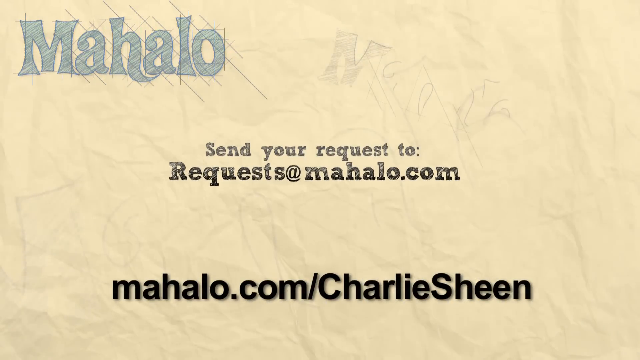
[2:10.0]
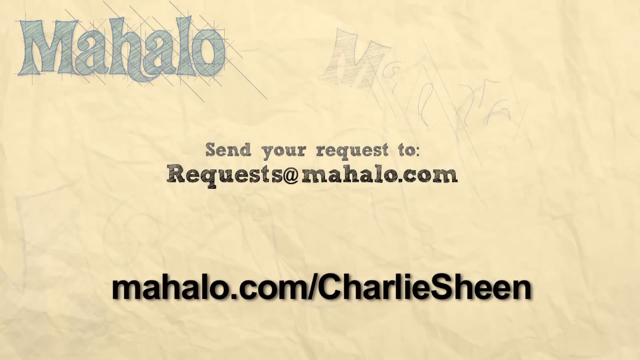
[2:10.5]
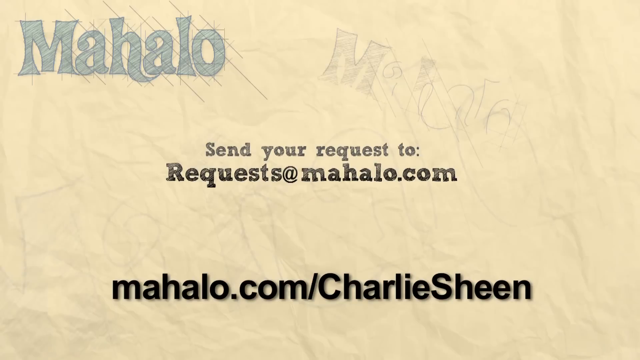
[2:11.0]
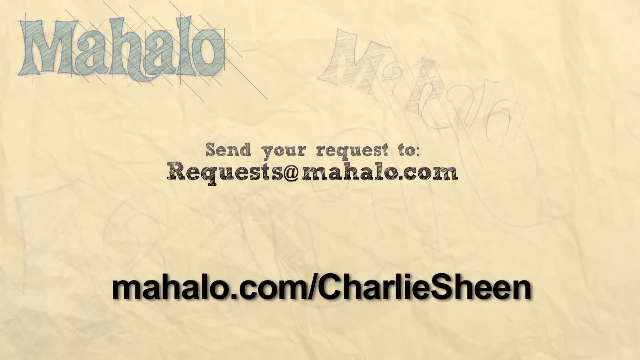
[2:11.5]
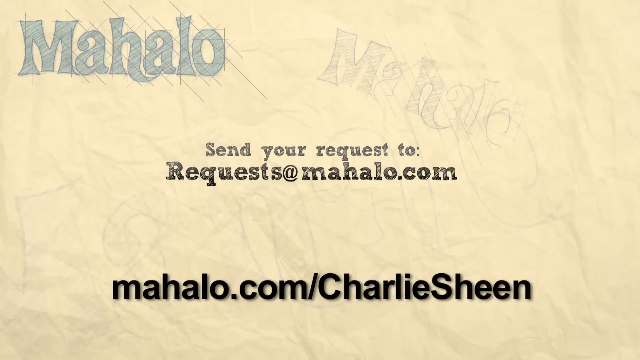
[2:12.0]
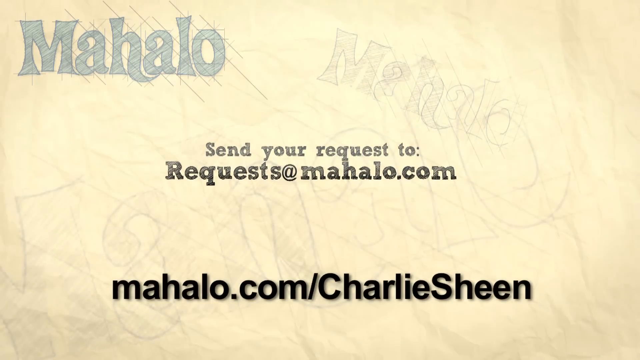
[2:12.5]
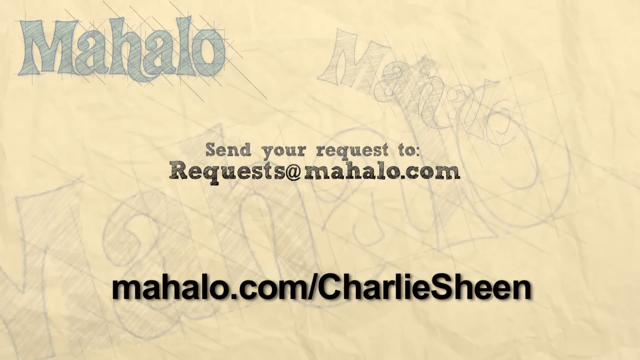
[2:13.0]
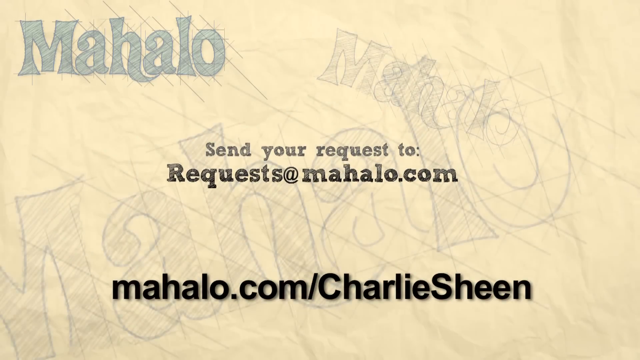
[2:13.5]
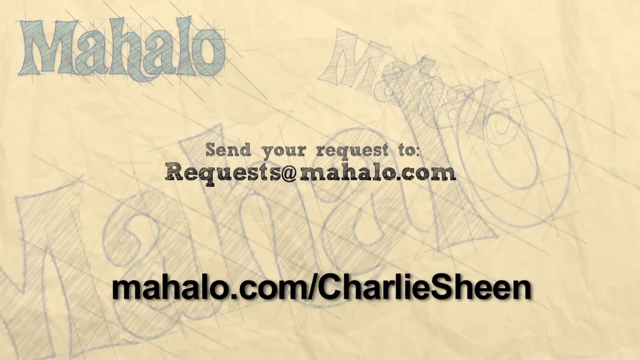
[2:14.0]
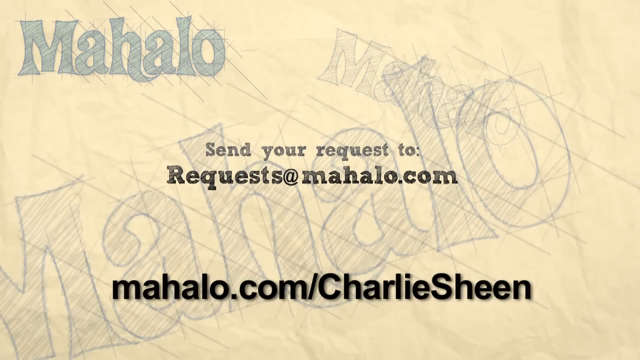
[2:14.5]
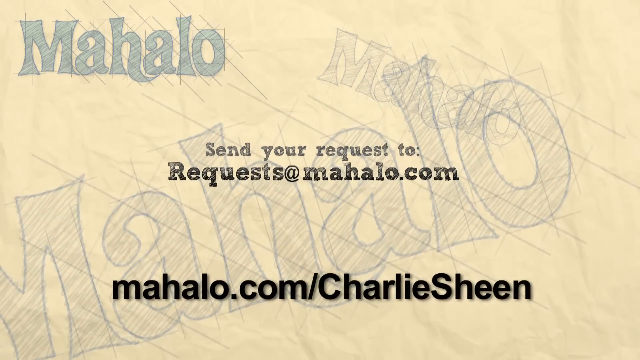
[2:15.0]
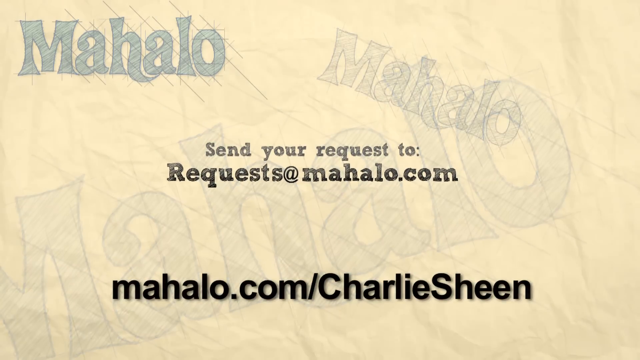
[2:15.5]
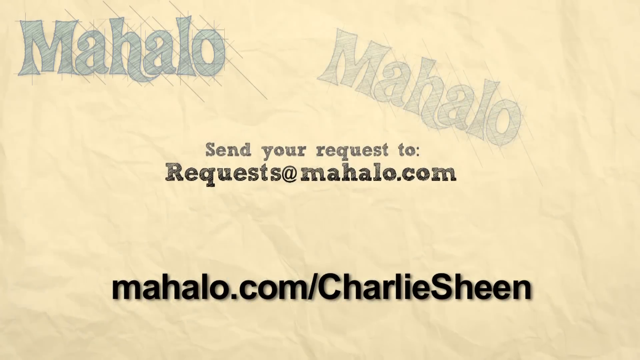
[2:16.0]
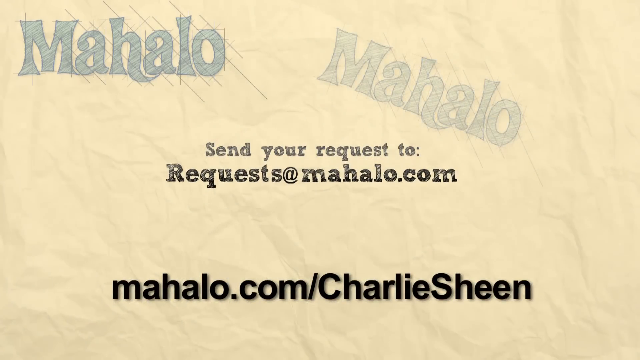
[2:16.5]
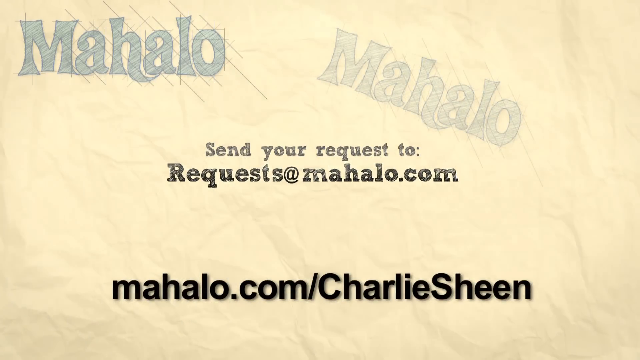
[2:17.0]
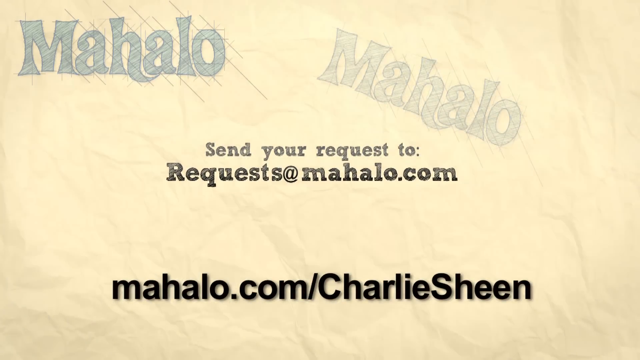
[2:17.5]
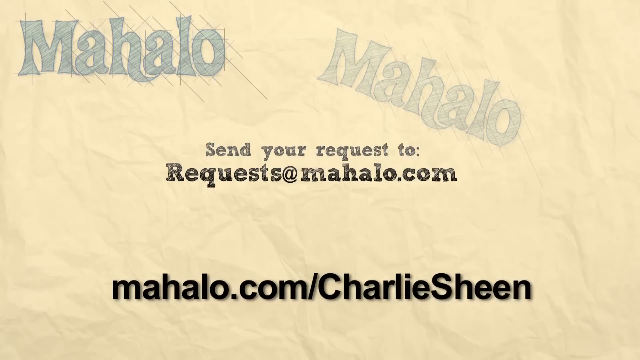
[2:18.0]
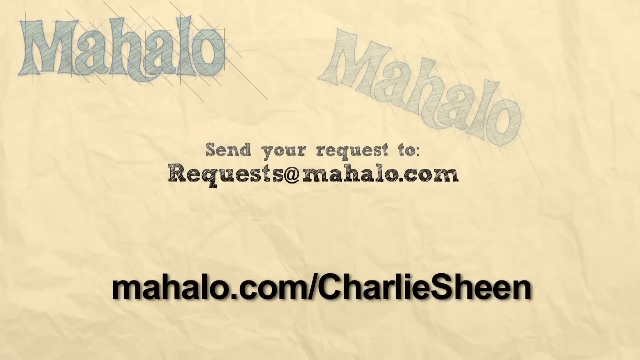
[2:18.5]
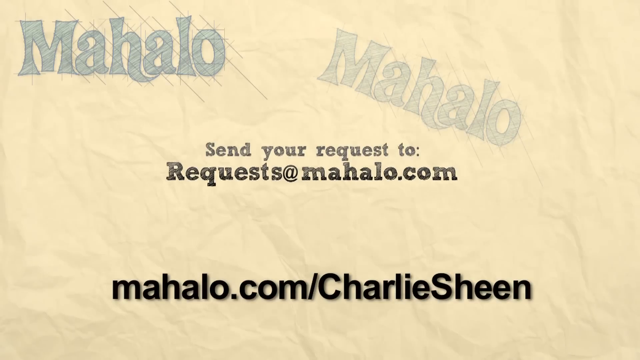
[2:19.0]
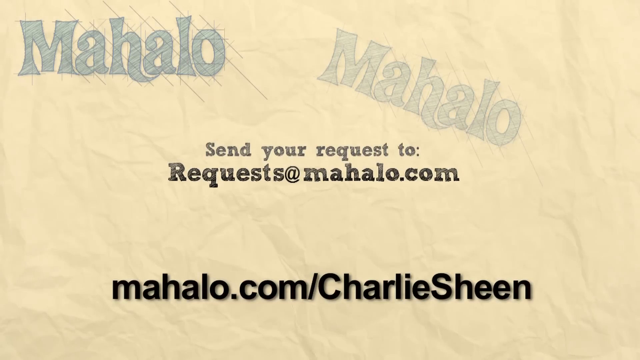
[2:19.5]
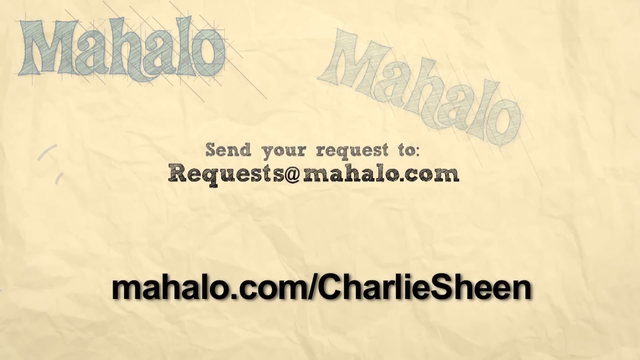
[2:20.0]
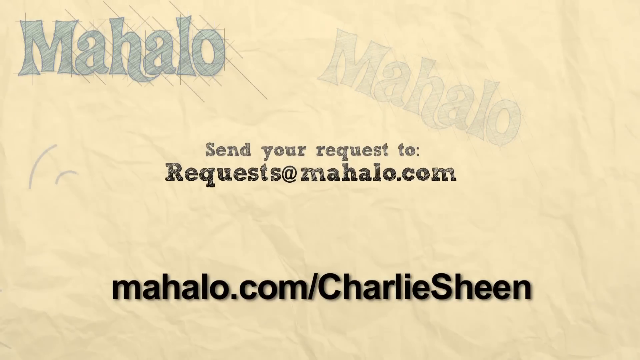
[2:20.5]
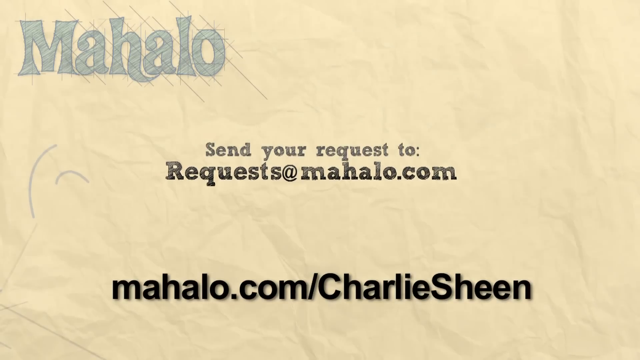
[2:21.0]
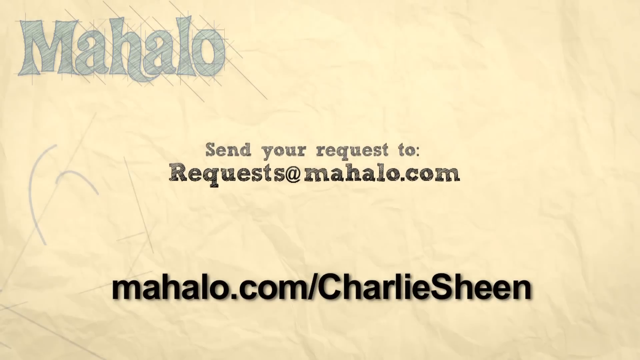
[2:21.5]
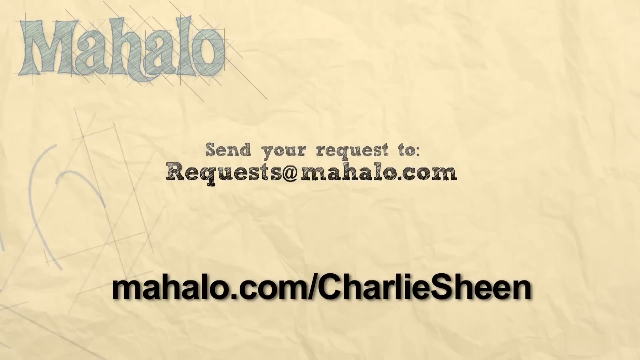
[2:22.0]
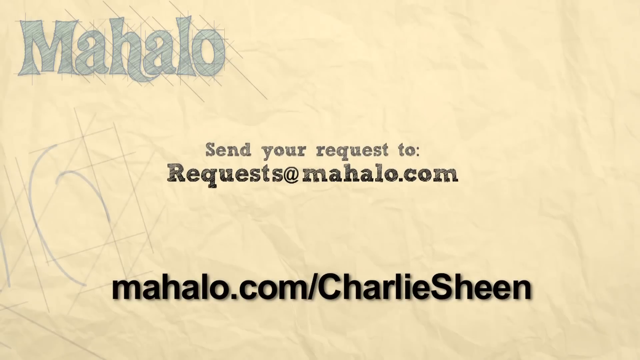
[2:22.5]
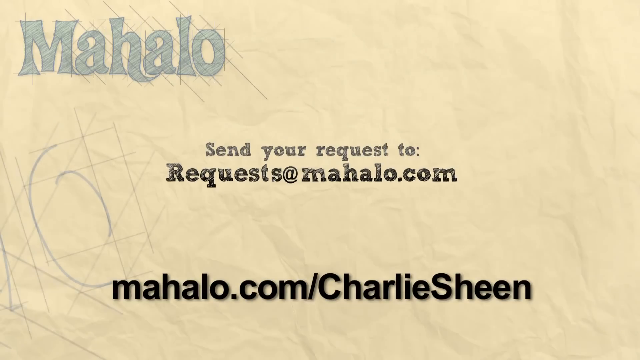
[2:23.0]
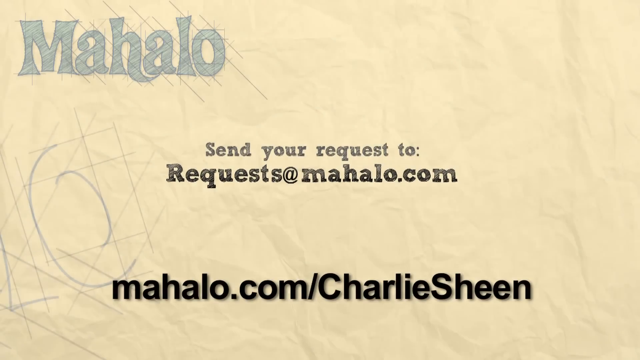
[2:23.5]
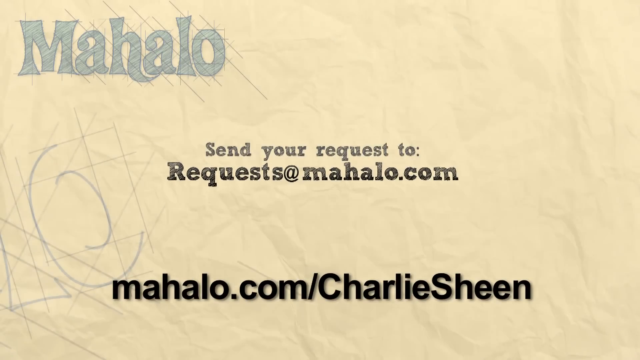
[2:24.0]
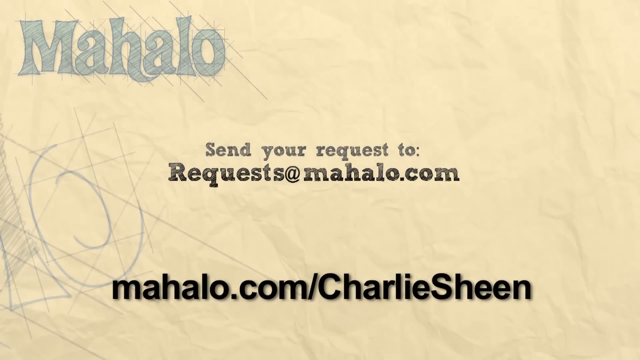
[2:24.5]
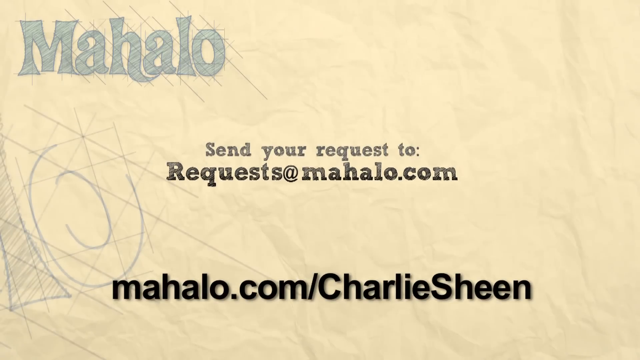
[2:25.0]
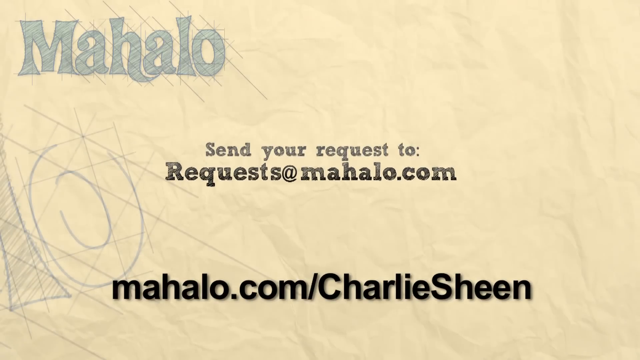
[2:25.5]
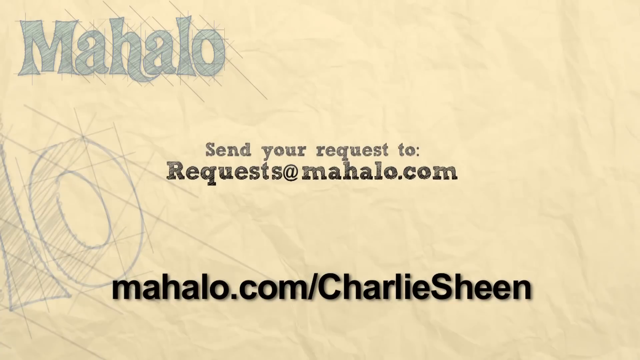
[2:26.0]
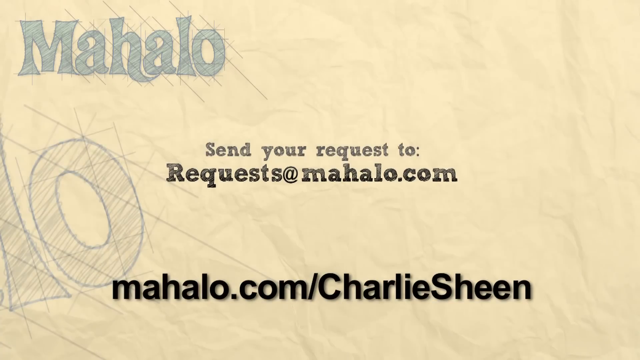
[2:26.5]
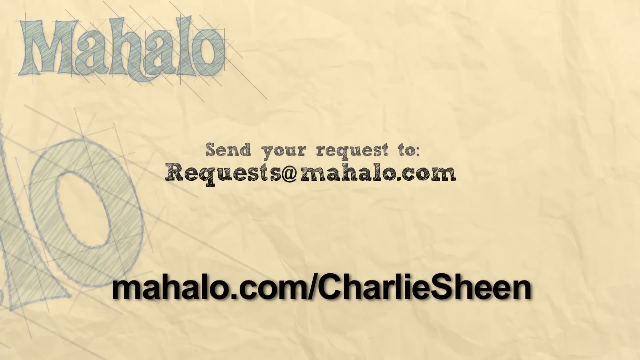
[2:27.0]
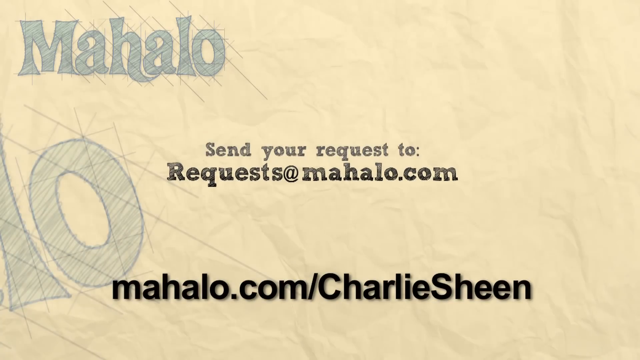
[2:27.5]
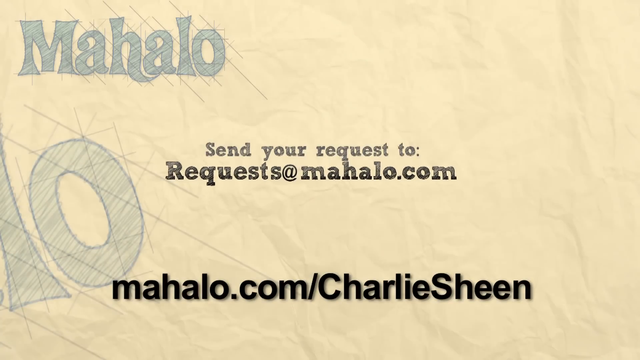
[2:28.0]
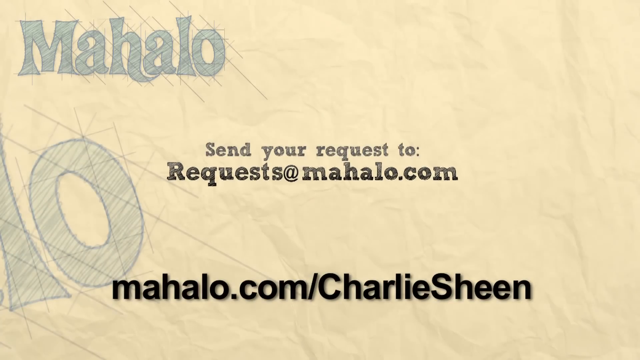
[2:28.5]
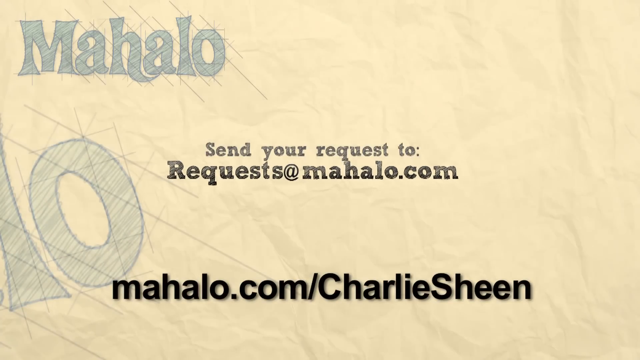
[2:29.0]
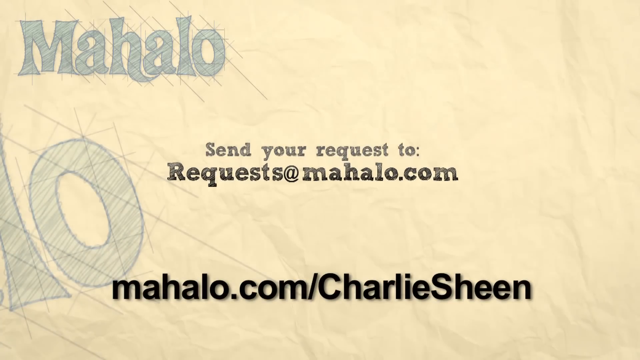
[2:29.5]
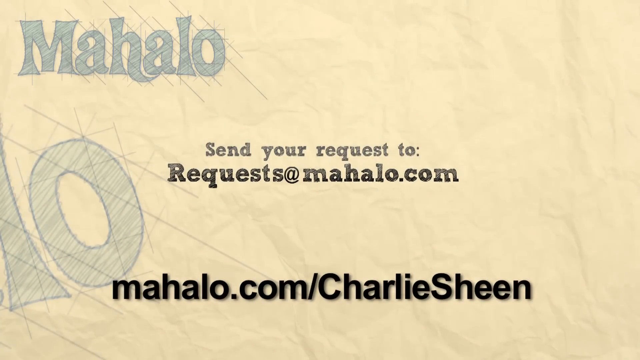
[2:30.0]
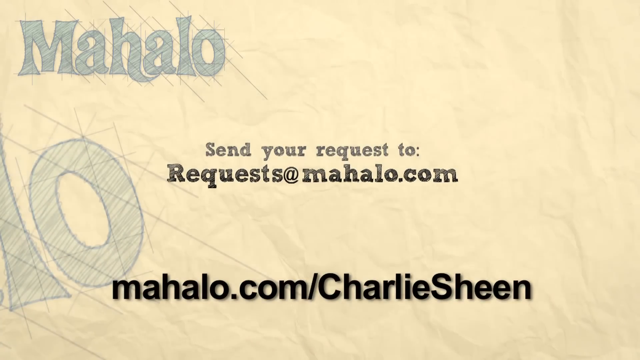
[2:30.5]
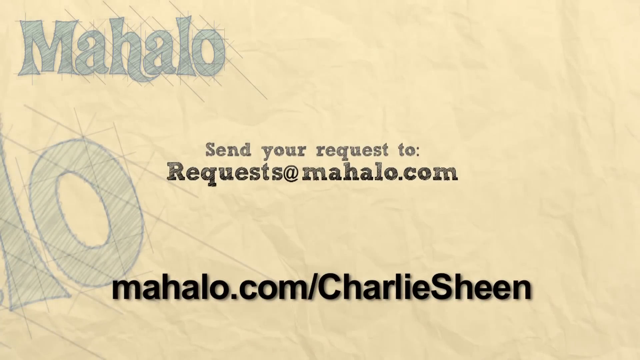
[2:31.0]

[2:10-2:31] The video closes by directing viewers to mahalo.com/Charlie Sheen for more on the story between Charlie Sheen and Warner Brothers.